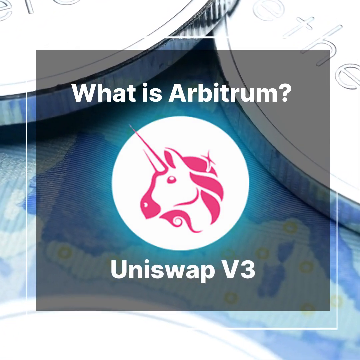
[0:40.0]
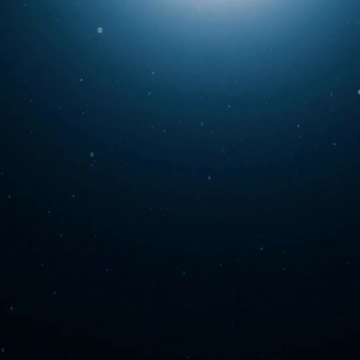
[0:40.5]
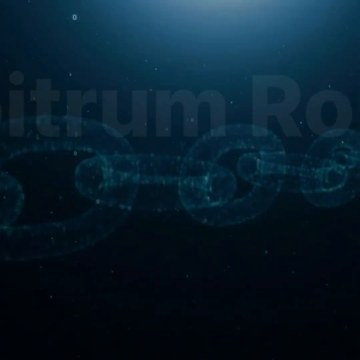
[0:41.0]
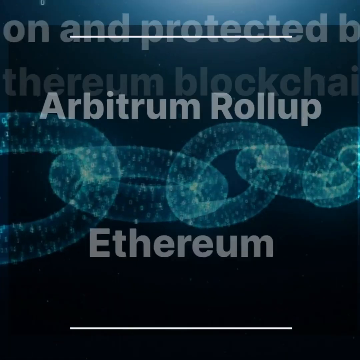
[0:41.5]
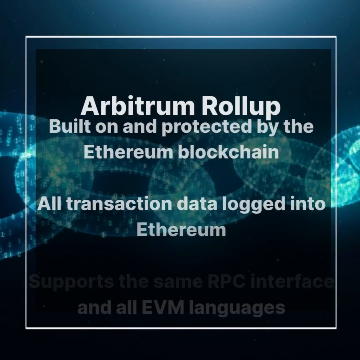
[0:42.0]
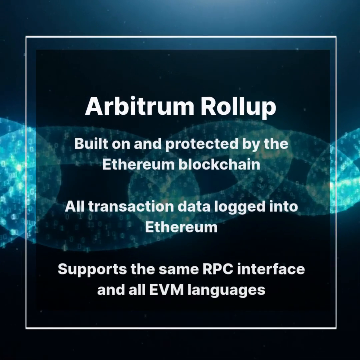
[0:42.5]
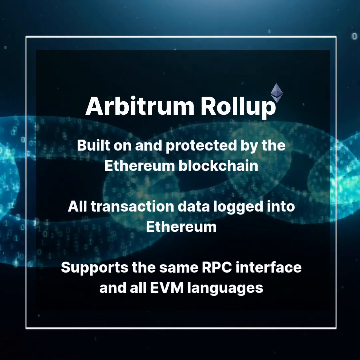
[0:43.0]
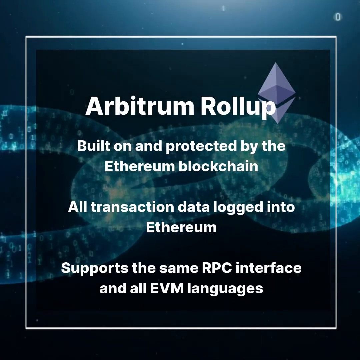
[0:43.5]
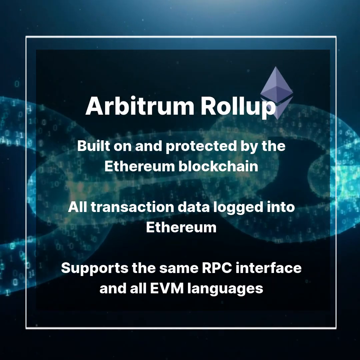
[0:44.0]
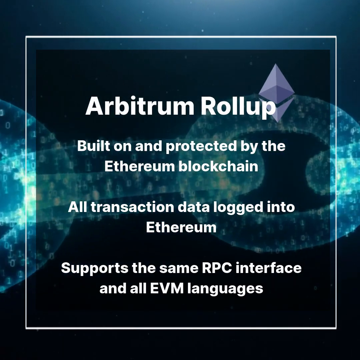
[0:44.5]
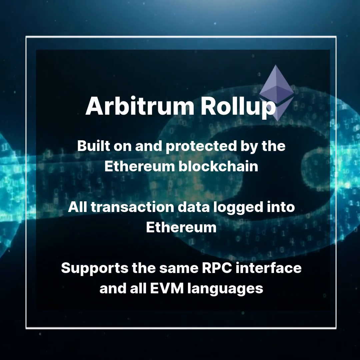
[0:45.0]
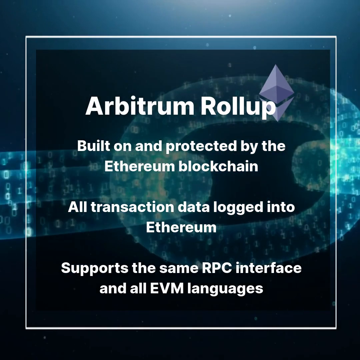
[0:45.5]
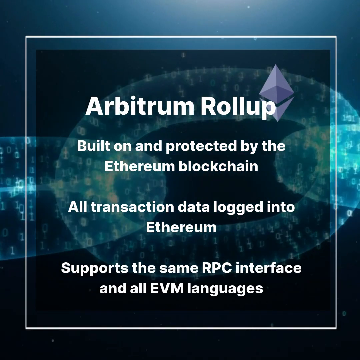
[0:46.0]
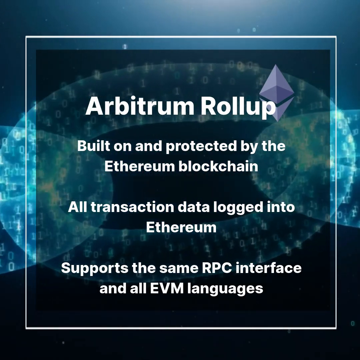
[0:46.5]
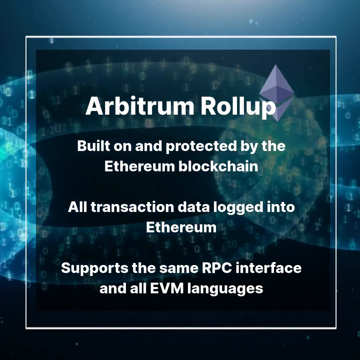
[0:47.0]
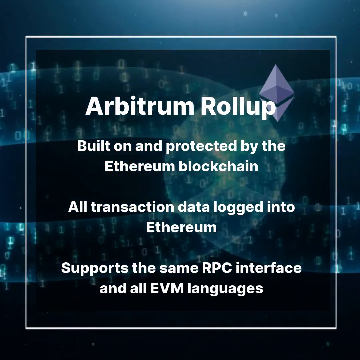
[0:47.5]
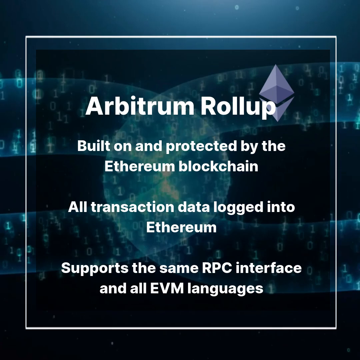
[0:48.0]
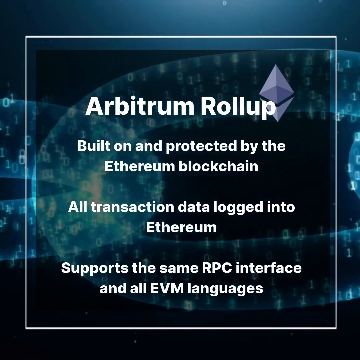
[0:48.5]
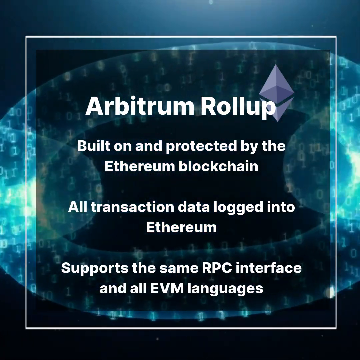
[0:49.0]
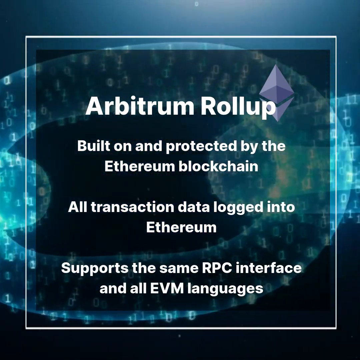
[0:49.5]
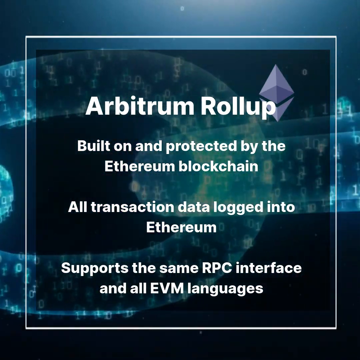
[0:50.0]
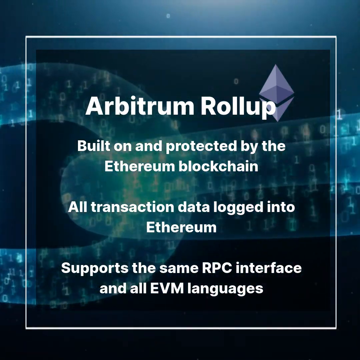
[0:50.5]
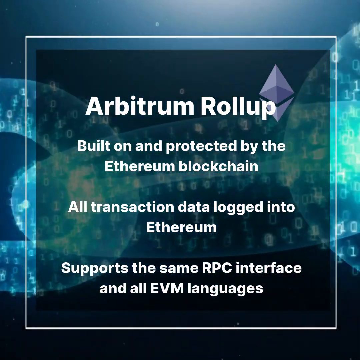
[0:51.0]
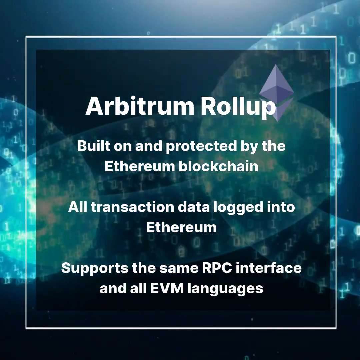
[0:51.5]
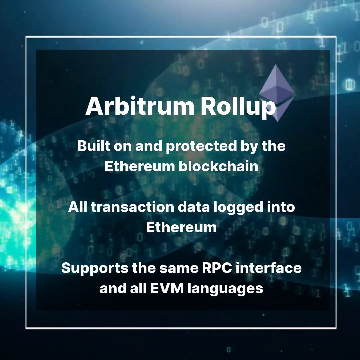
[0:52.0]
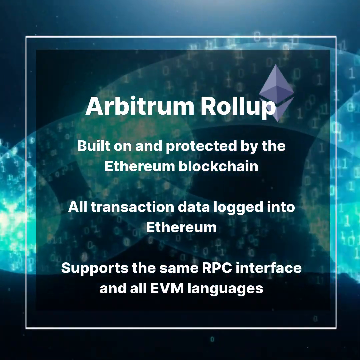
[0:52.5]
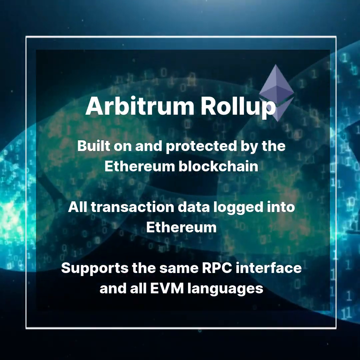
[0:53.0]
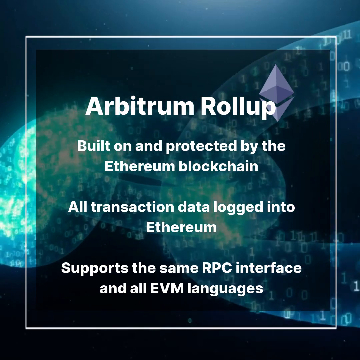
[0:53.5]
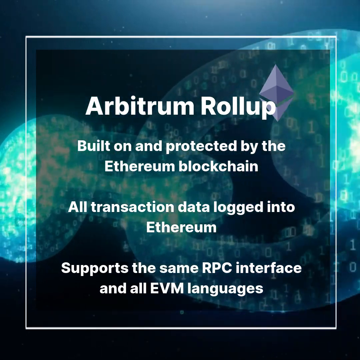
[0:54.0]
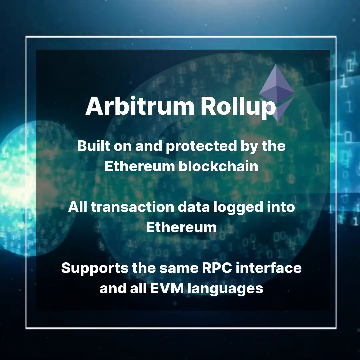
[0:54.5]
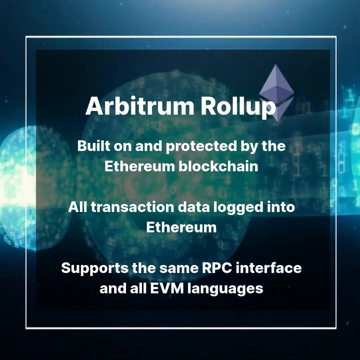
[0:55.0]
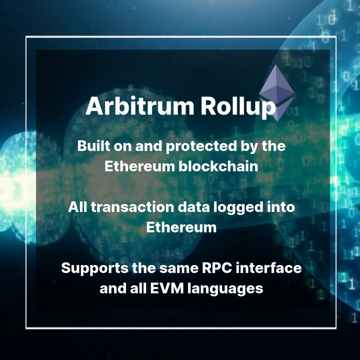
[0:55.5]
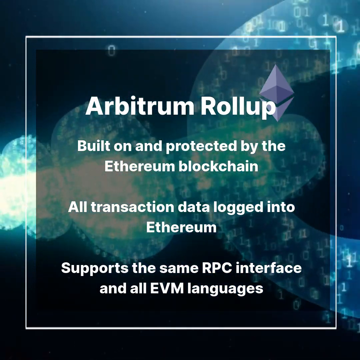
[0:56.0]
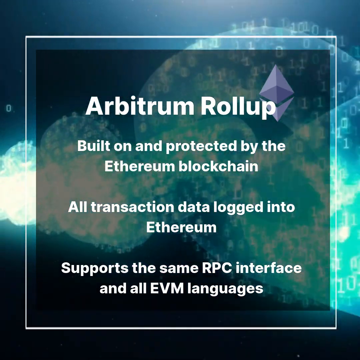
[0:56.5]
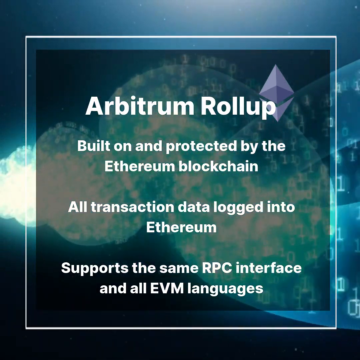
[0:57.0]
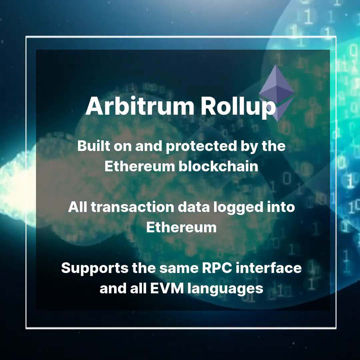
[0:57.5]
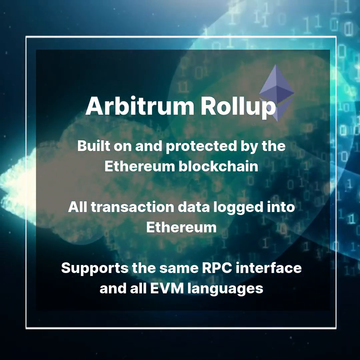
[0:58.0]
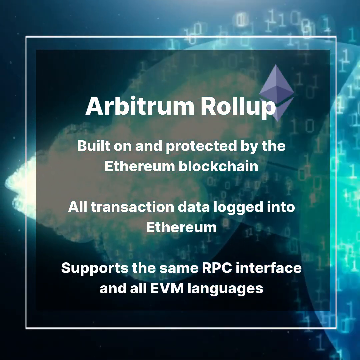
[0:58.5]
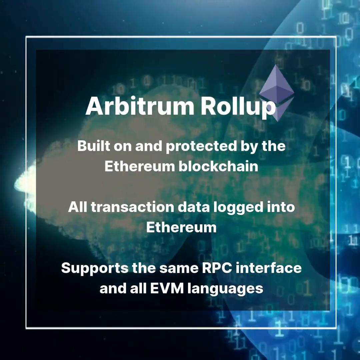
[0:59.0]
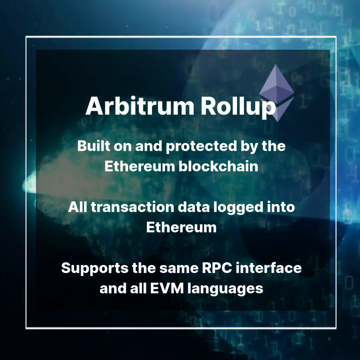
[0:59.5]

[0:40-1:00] Two coins in the background display something about Ethereum. The text "What is Arbitrum?" appears. A white circle with a pink unicorn head in the middle is shown with the text "Uniswap v3". Then text reads "Arbitrum rollup" and "built on and protected by the Ethereum blockchain, all transactional data logged into Ethereum", along with mention of the same RPC interface and all EVM languages. A glowing blue chain moves in the background with a 3D effect.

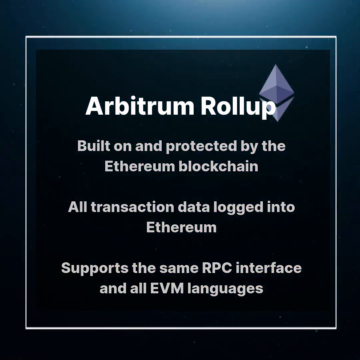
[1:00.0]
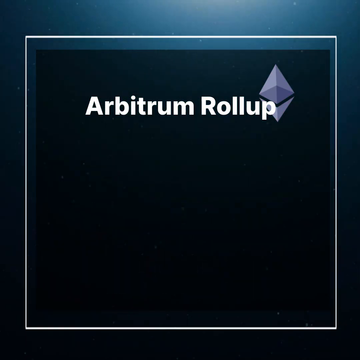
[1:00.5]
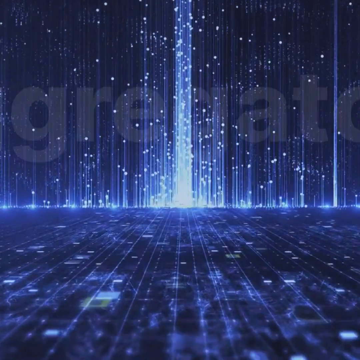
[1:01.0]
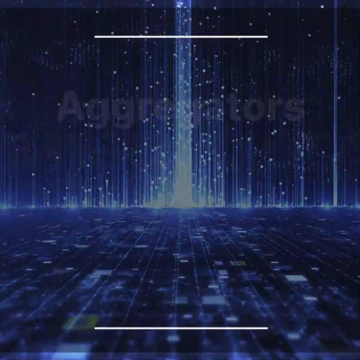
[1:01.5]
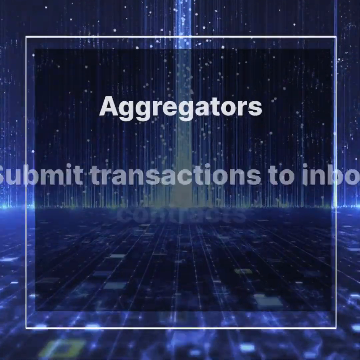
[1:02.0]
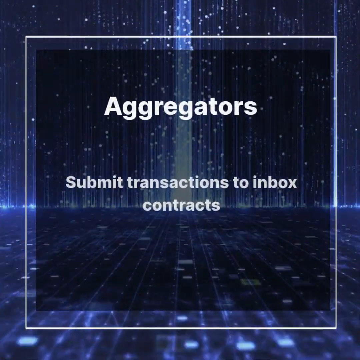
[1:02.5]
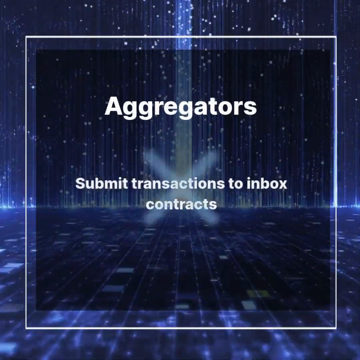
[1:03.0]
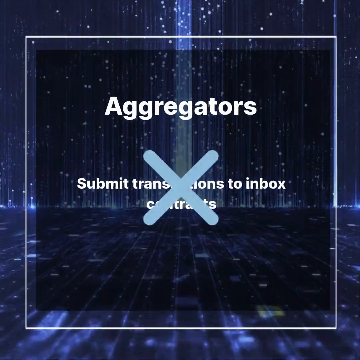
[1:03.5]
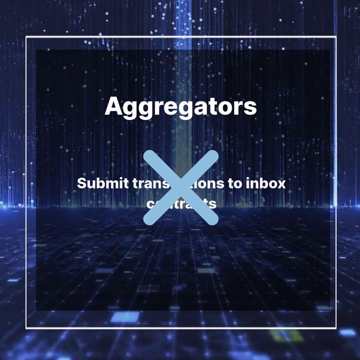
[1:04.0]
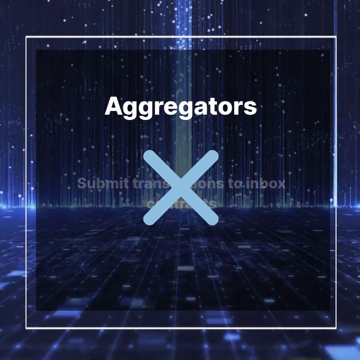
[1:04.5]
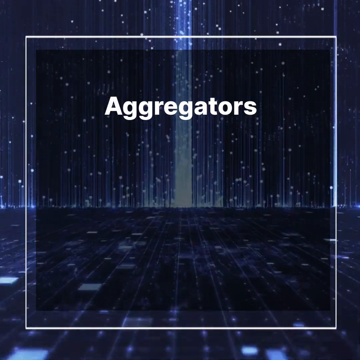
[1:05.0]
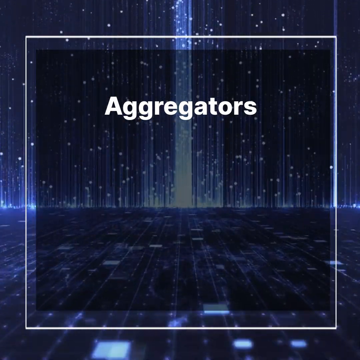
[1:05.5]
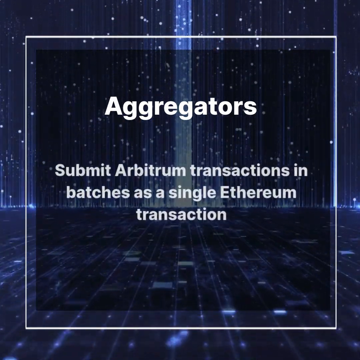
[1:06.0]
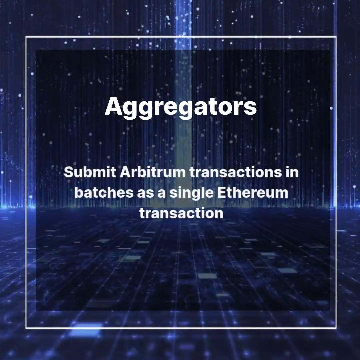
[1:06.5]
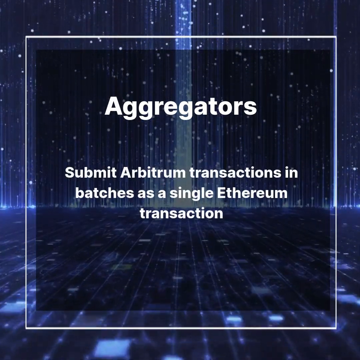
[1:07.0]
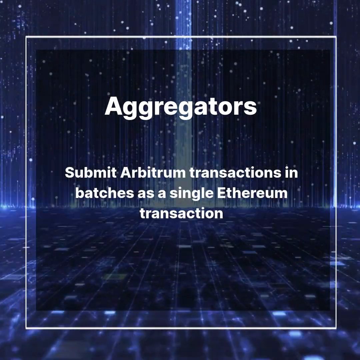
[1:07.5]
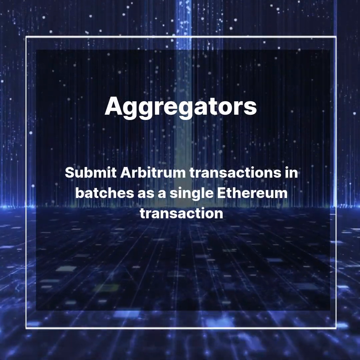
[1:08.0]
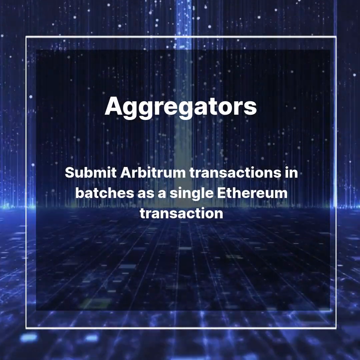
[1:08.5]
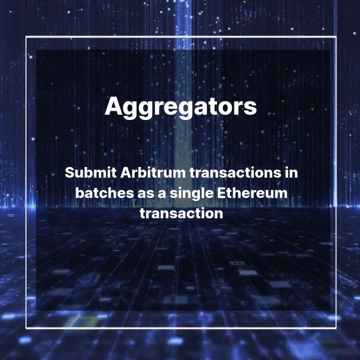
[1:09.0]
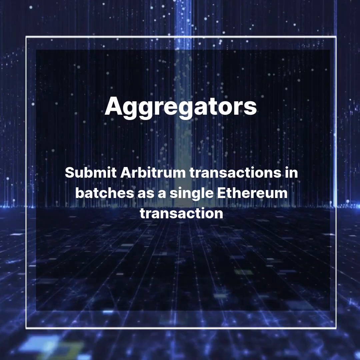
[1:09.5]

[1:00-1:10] Text about an Arbitrum rollup reads "built on and protected by the Ethereum blockchain, all transaction and data logged into Ethereum, supports the same RPC interface in all EVM languages." The scene then shifts to a big blue screen with a lot of lights. The text "aggregators submit transactions to inbox contracts" appears with a big X over it, followed by "submit Arbitrum transactions in batches as a single Ethereum transaction."